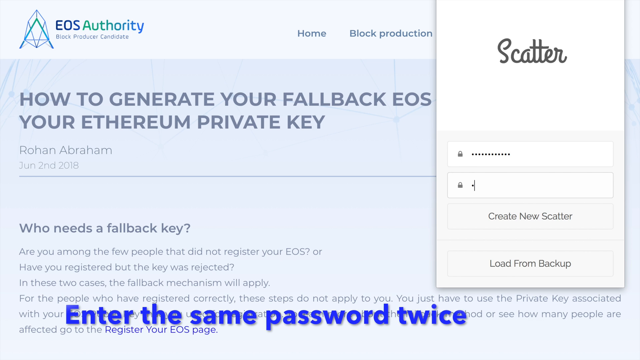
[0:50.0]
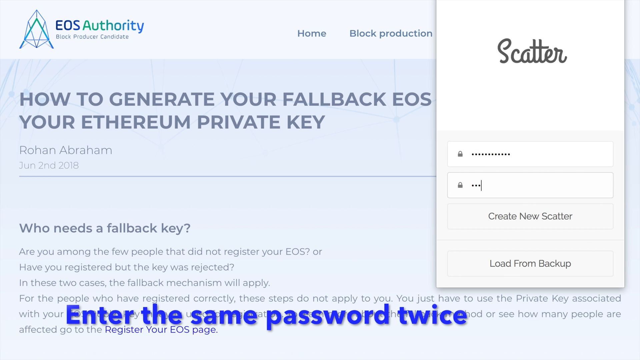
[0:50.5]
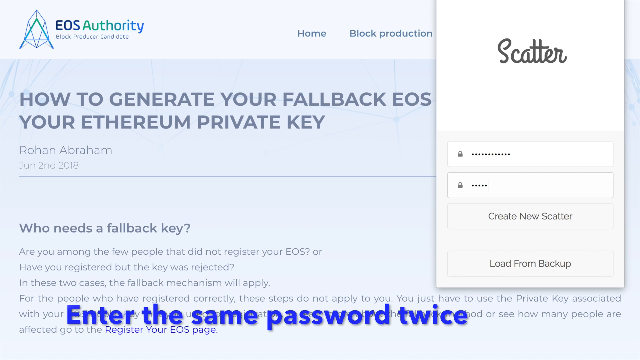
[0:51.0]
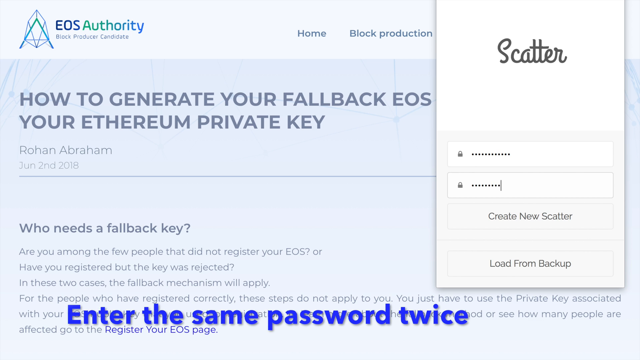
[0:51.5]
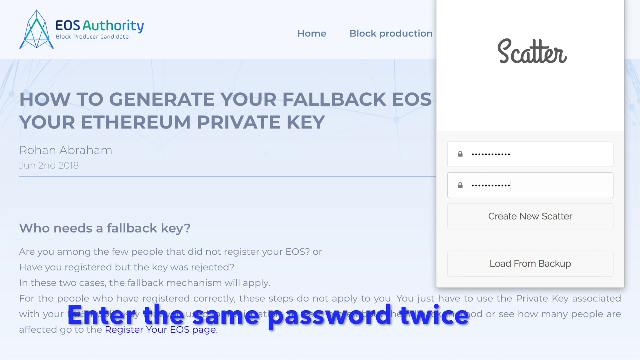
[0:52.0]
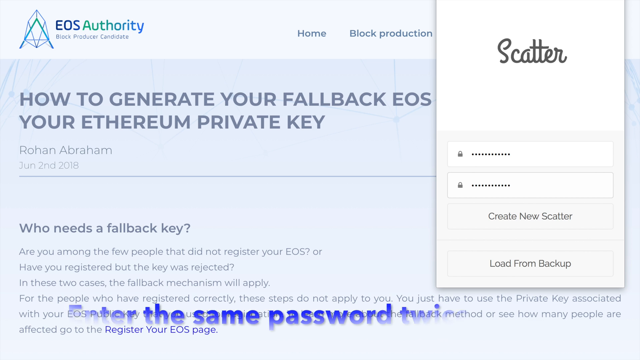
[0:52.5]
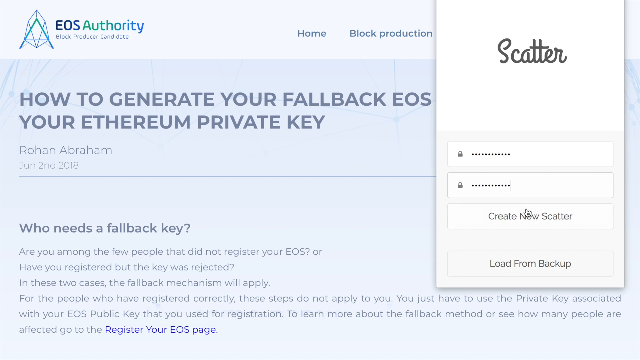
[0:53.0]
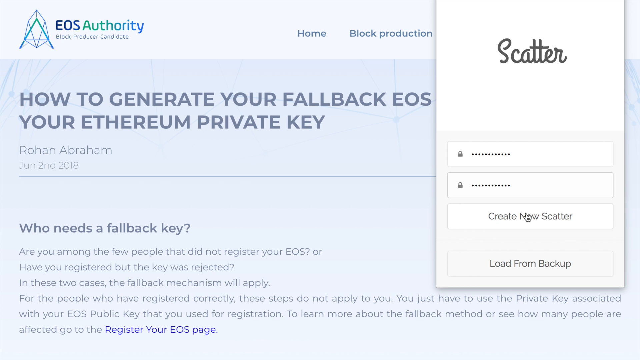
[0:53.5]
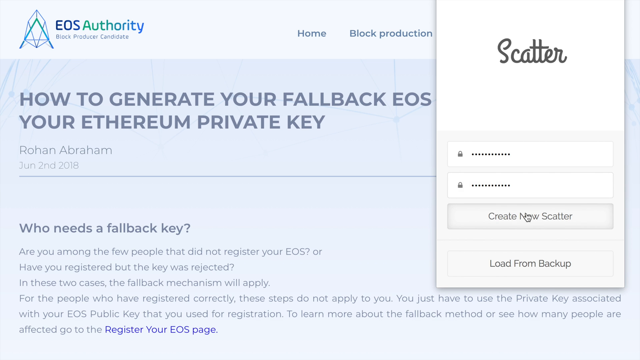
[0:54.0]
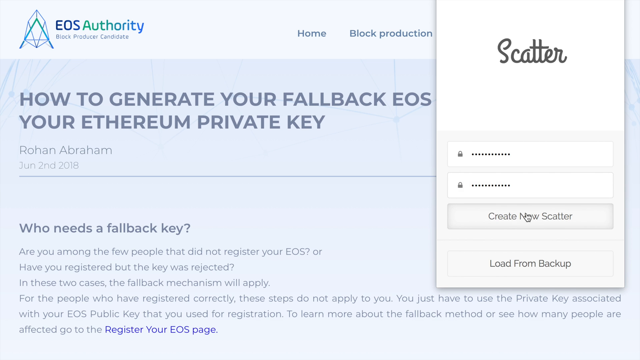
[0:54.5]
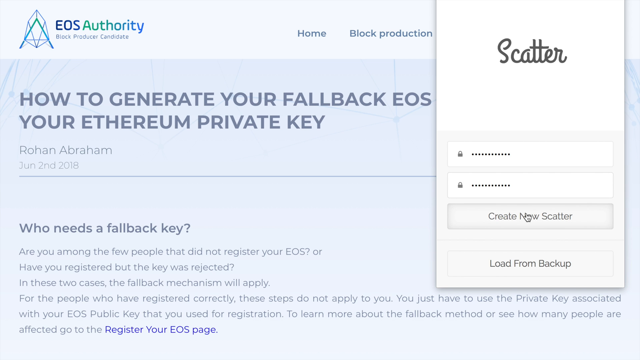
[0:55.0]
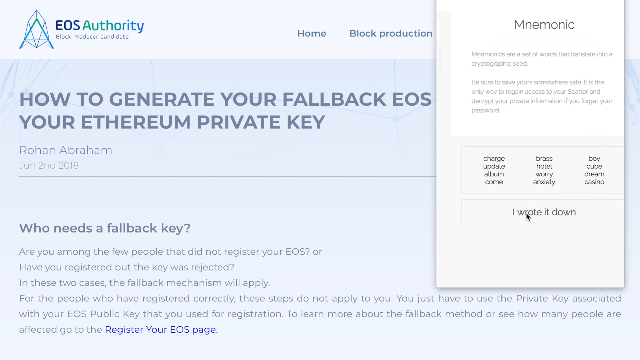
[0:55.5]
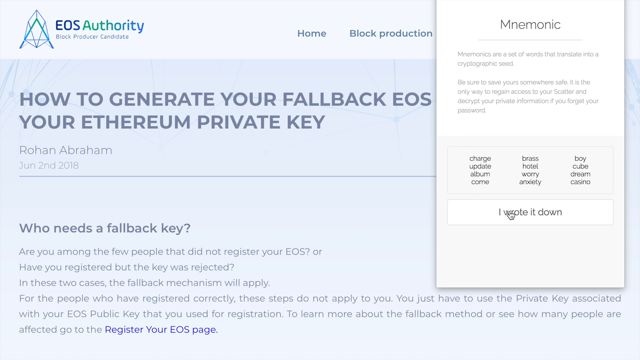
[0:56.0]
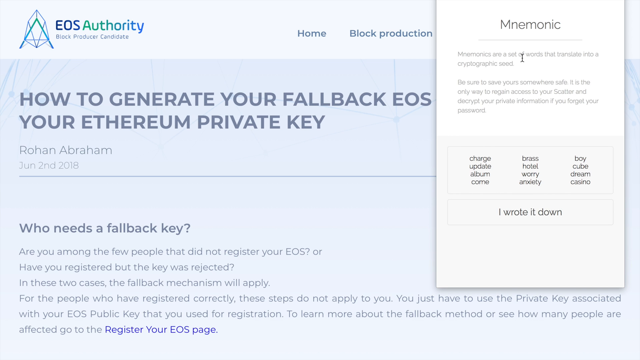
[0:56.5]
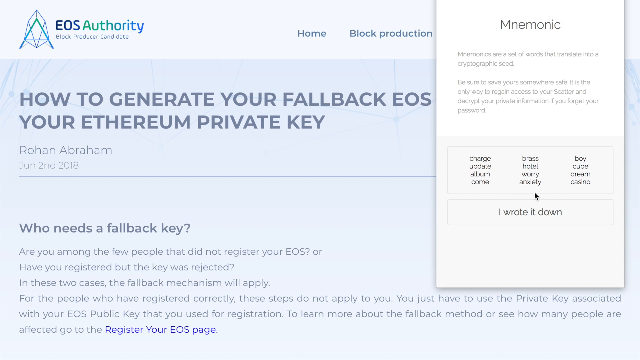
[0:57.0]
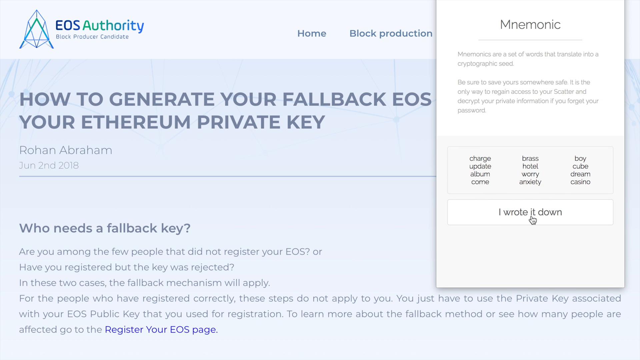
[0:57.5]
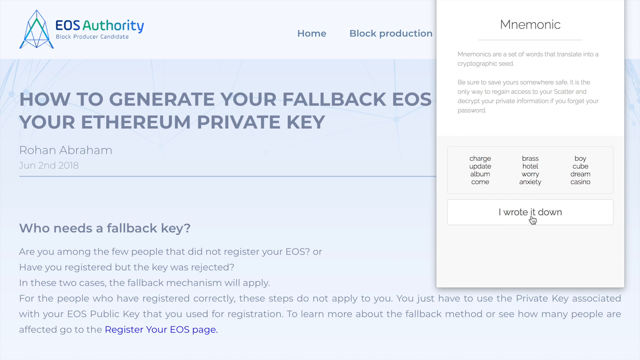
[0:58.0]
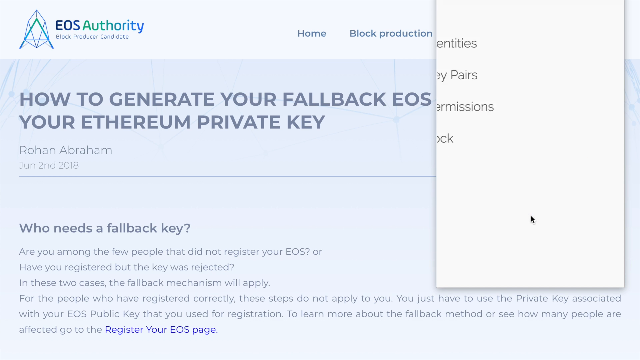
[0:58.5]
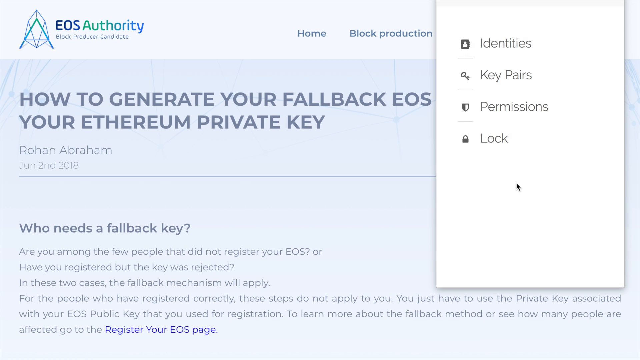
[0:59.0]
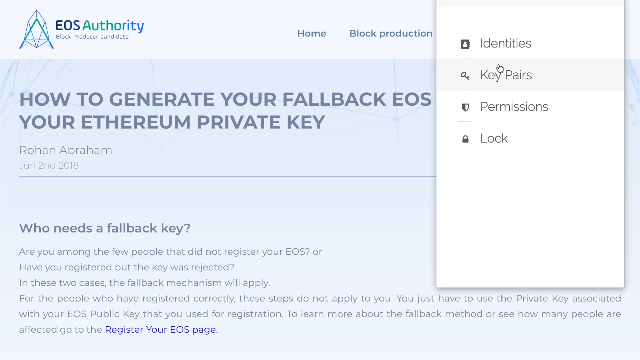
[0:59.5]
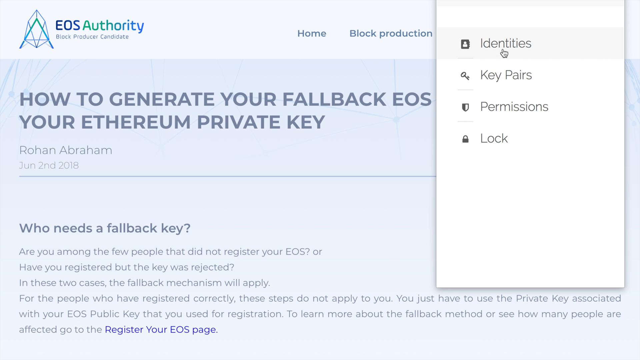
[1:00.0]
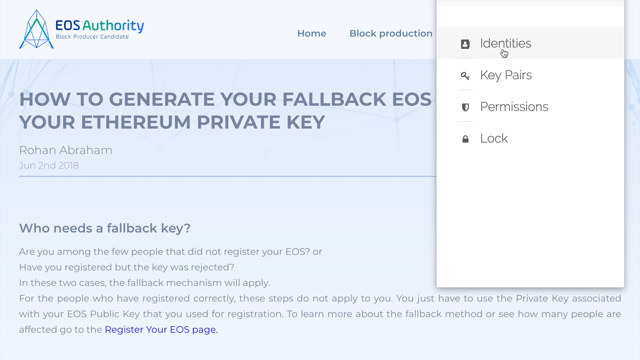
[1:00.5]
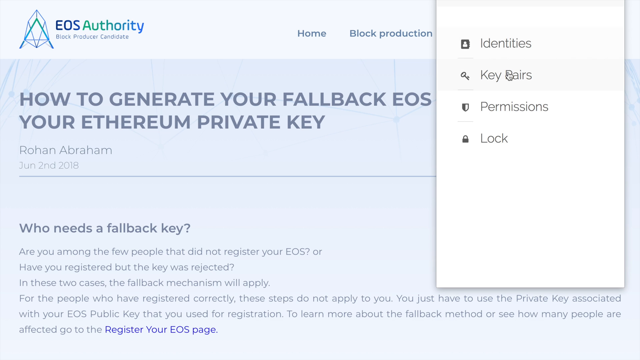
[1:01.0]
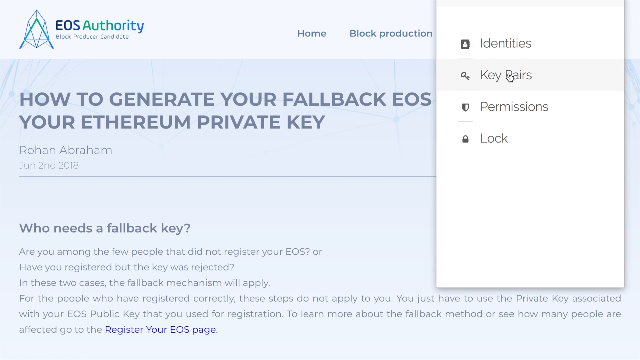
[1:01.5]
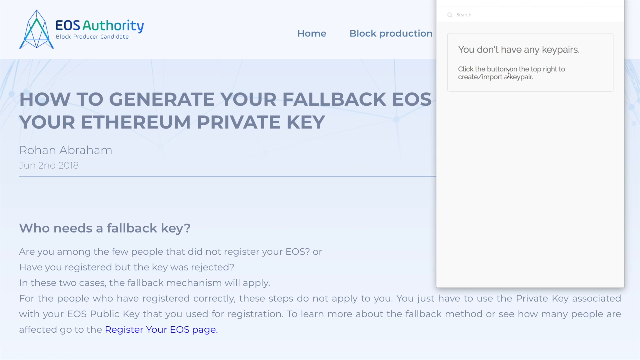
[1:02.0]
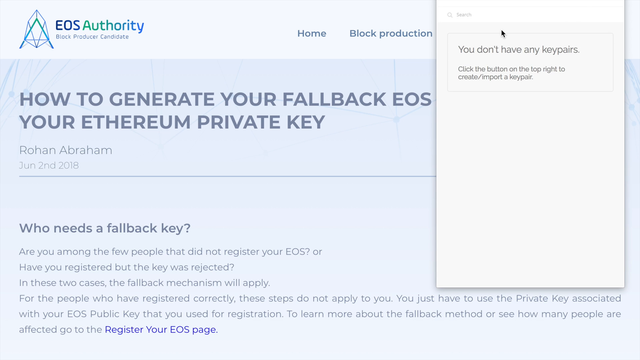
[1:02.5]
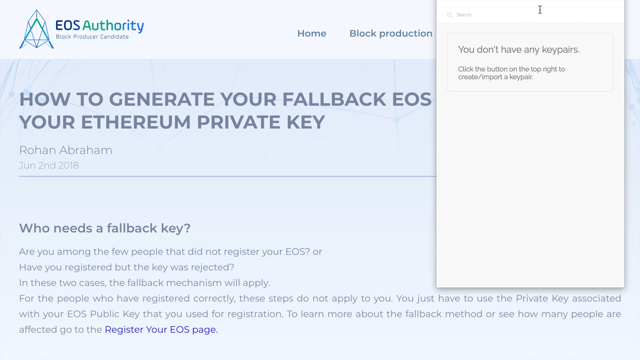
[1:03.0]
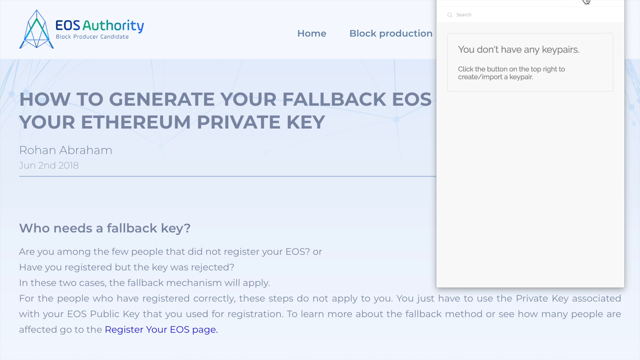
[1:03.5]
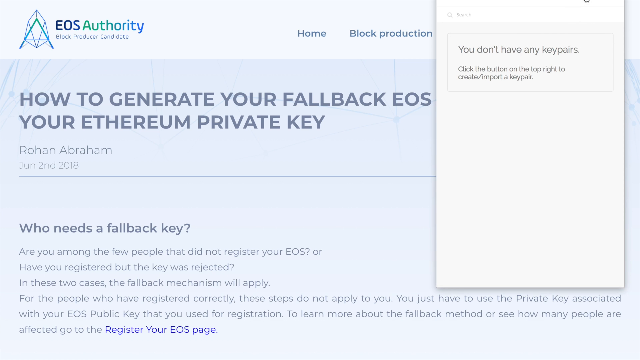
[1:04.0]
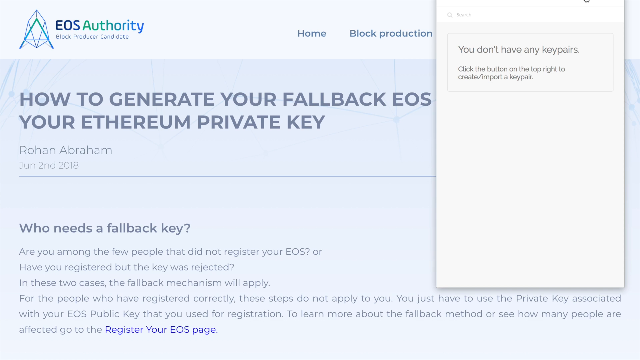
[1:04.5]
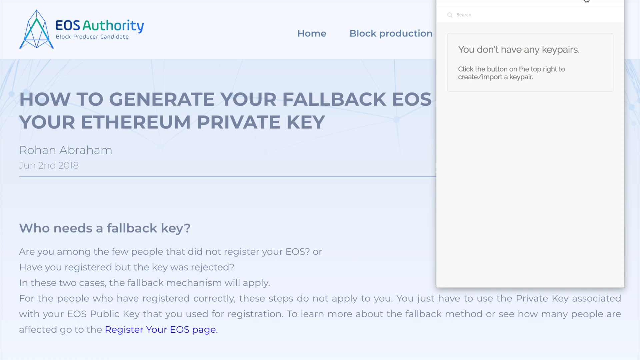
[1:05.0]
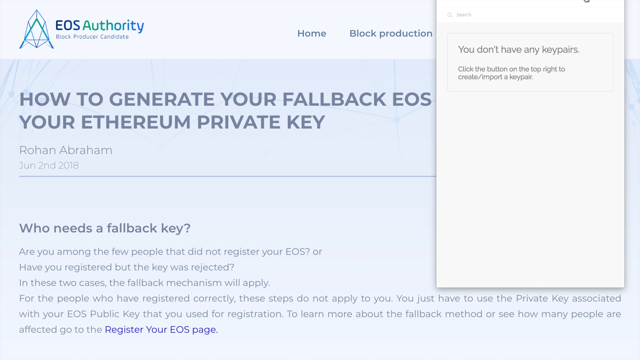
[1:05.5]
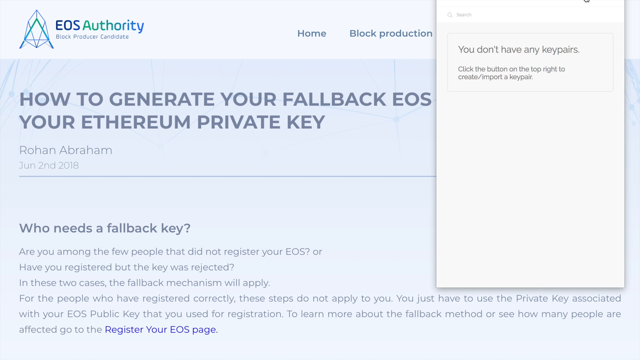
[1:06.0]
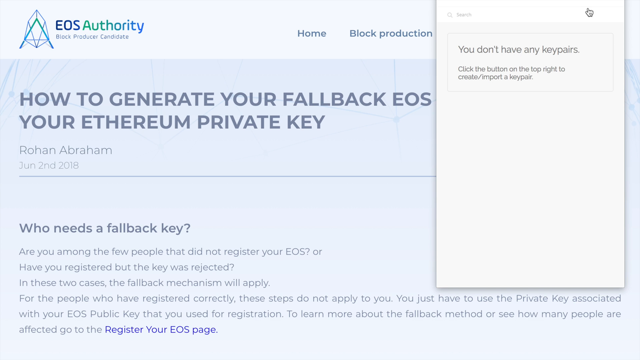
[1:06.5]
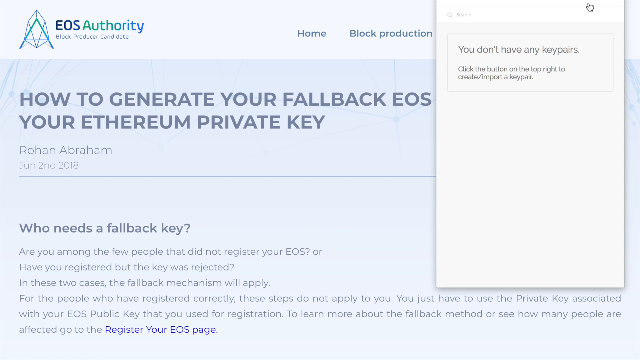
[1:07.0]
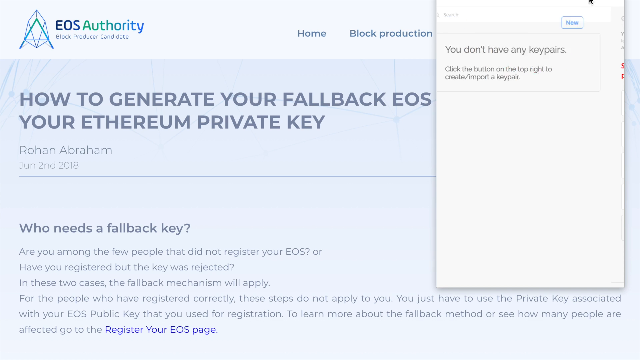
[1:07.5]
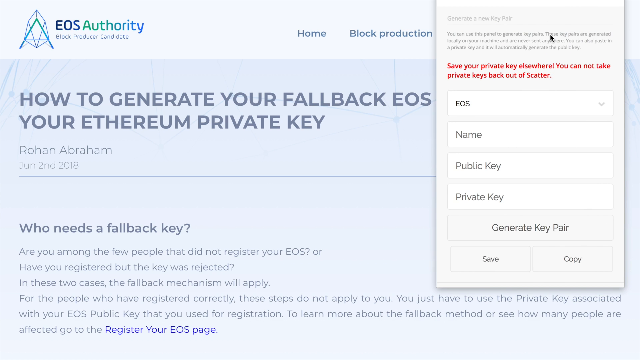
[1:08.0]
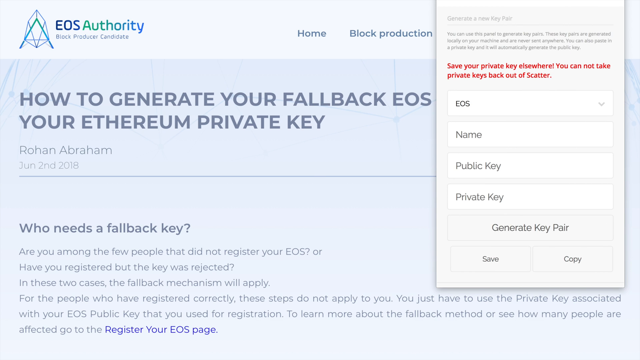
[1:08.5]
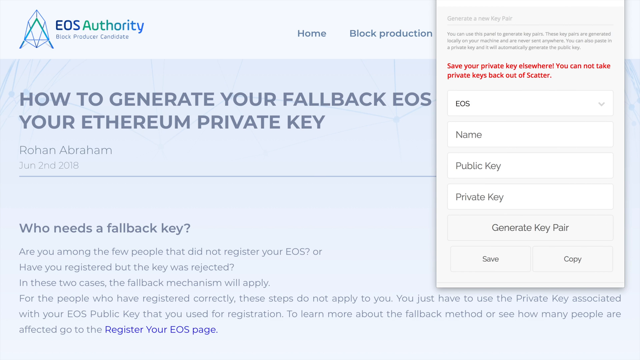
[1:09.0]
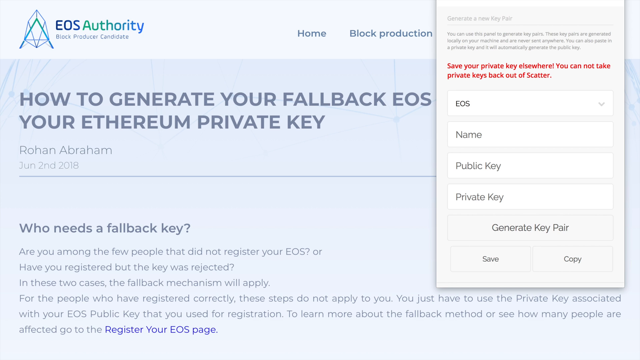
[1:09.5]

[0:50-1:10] A blue login page appears, with options such as identities, key pairs, and permissions, and it gives directions when something has not been entered correctly. Someone tries to type in their credentials, but a red pop-up message appears. A page shows information about EOS Authority with options such as a home tab and block production. The video then goes back to the Rohan Abraham page about generating a fallback EOS key, which shows "who needs a fallback key". The page instructs entering the same password twice.